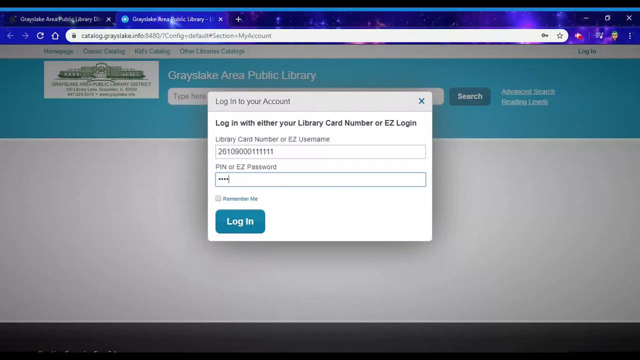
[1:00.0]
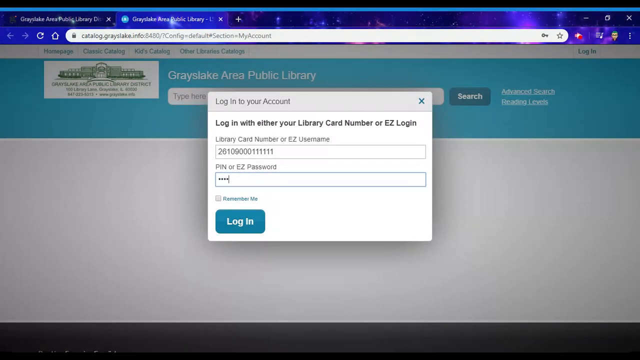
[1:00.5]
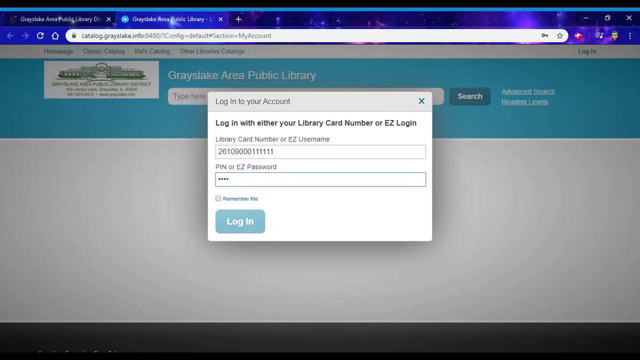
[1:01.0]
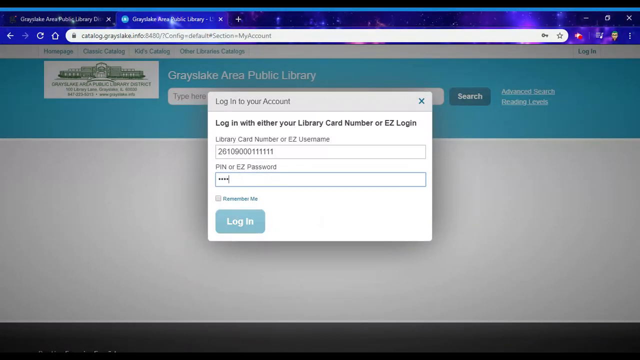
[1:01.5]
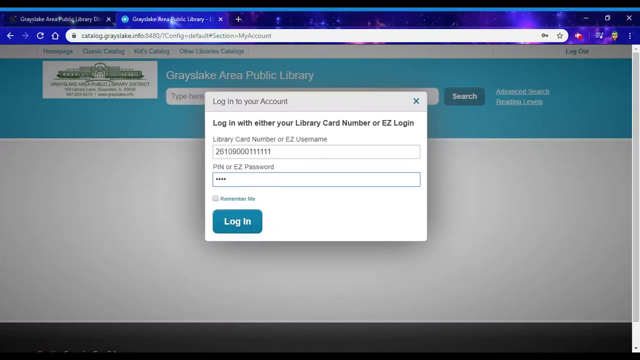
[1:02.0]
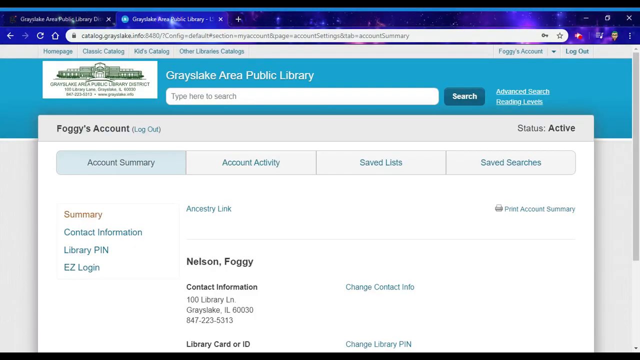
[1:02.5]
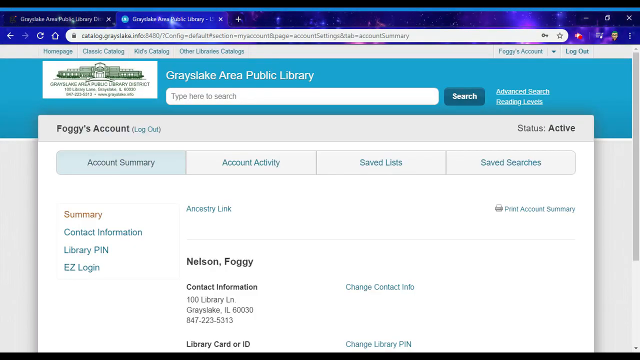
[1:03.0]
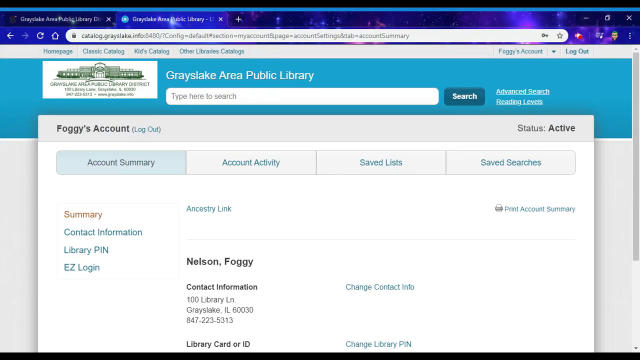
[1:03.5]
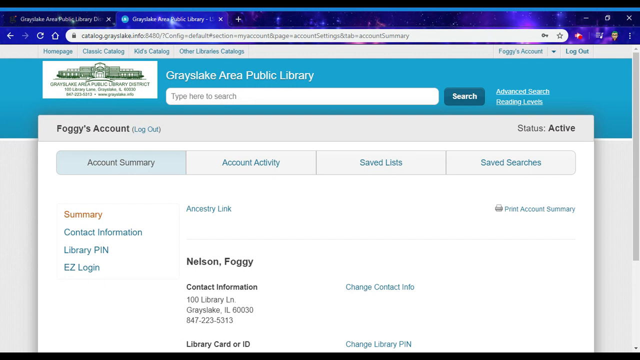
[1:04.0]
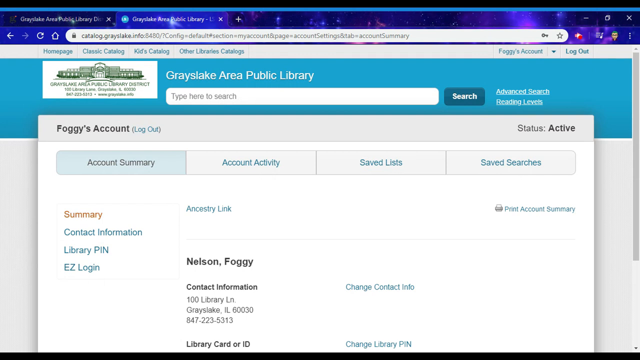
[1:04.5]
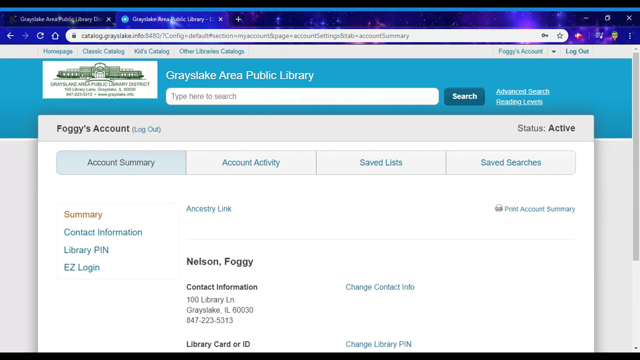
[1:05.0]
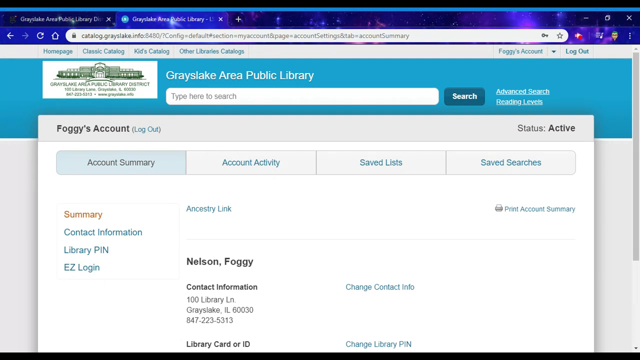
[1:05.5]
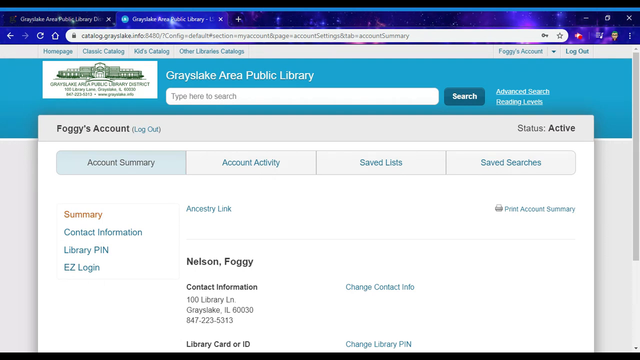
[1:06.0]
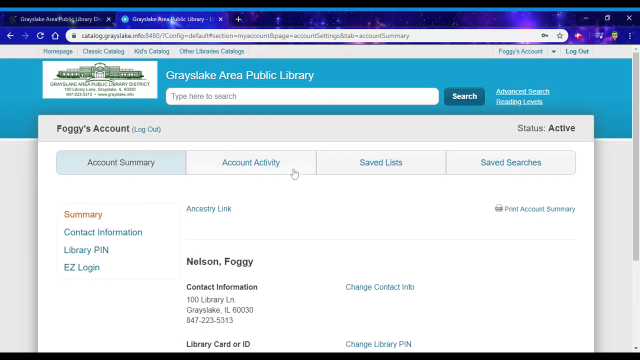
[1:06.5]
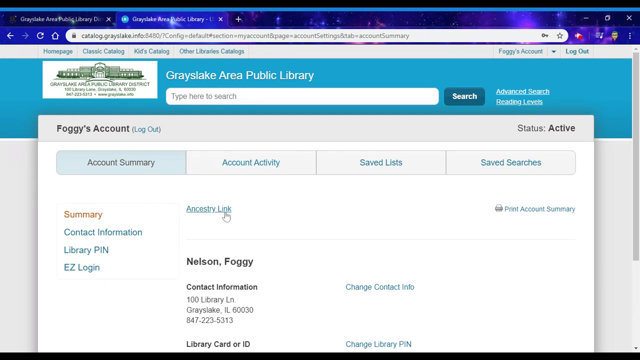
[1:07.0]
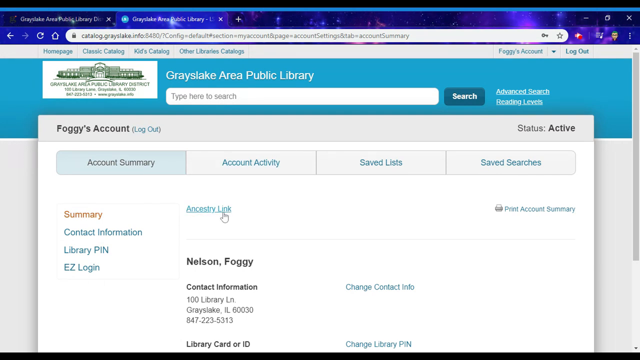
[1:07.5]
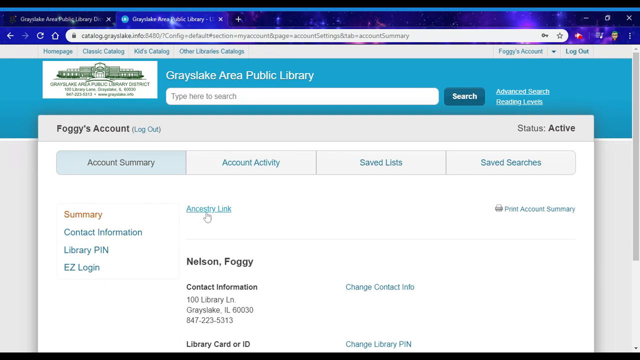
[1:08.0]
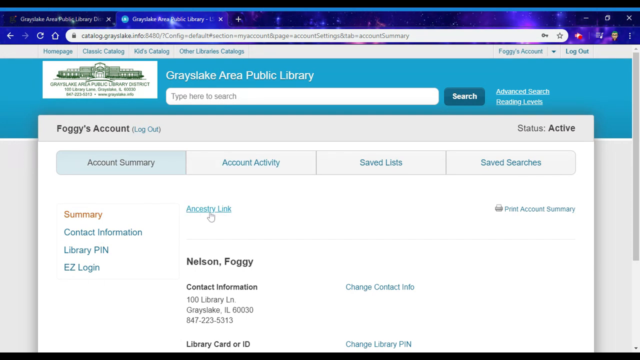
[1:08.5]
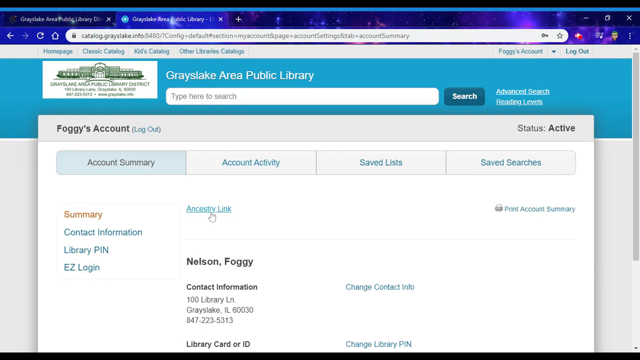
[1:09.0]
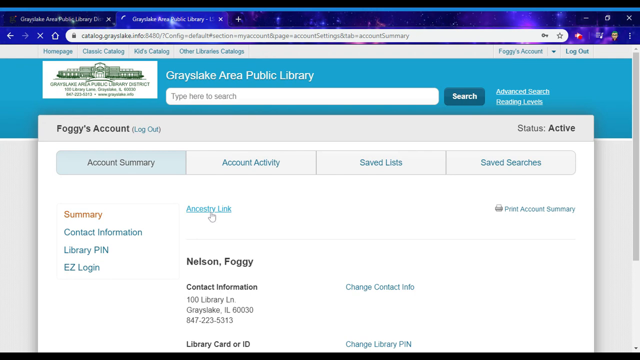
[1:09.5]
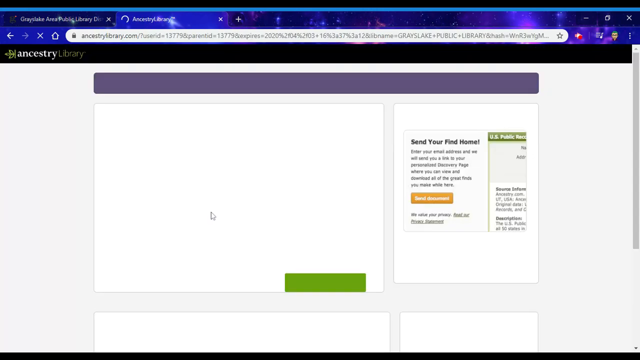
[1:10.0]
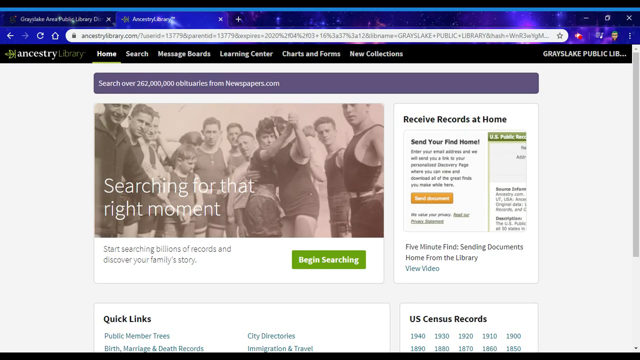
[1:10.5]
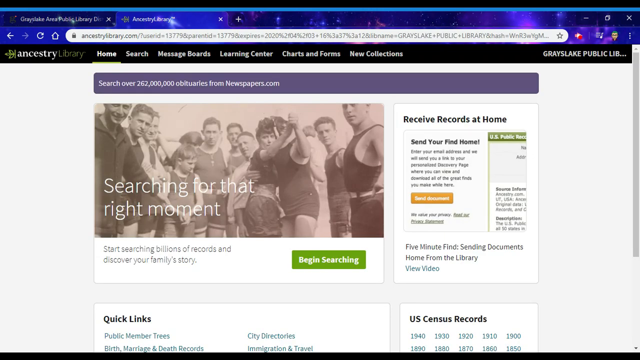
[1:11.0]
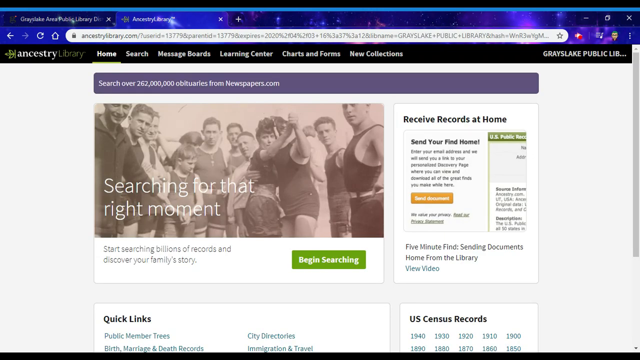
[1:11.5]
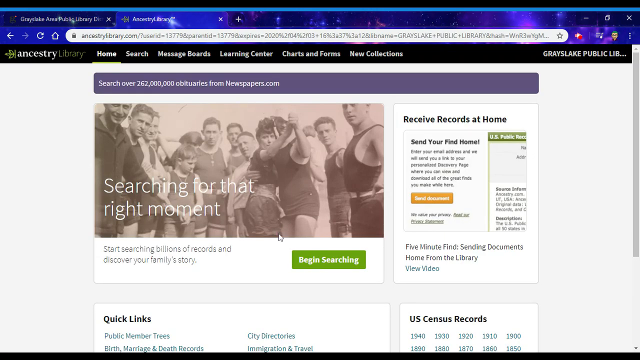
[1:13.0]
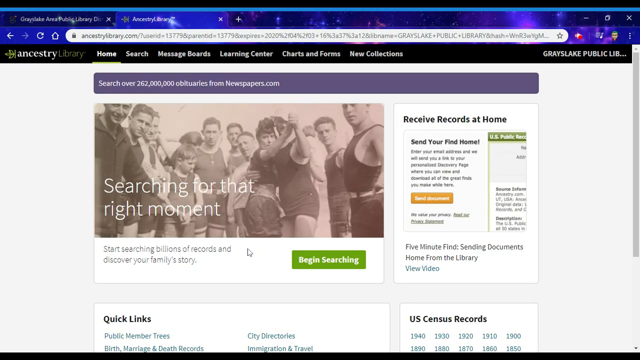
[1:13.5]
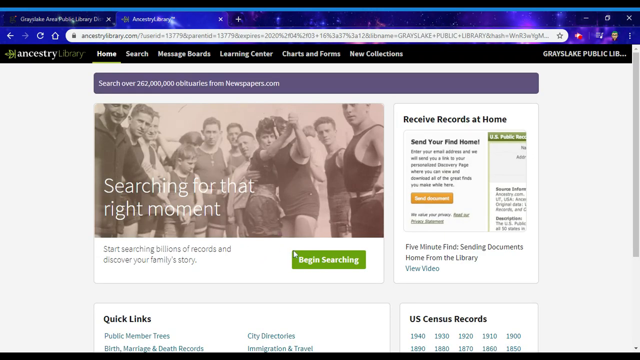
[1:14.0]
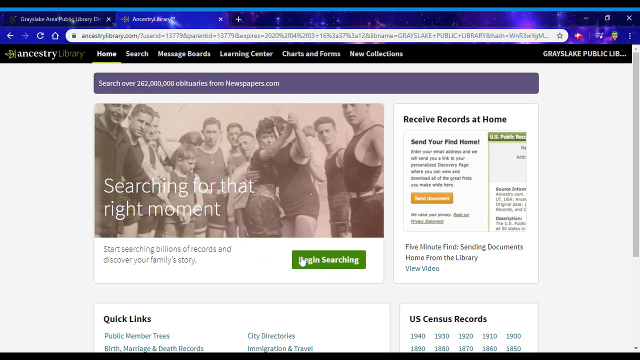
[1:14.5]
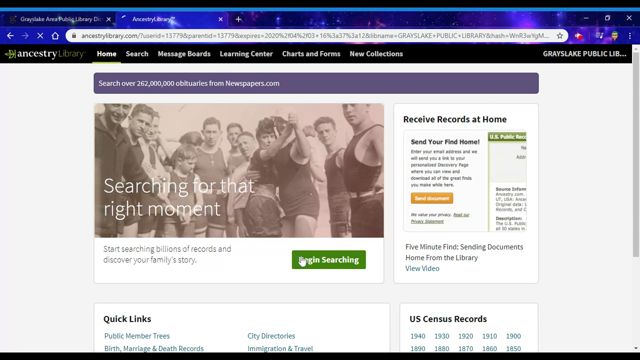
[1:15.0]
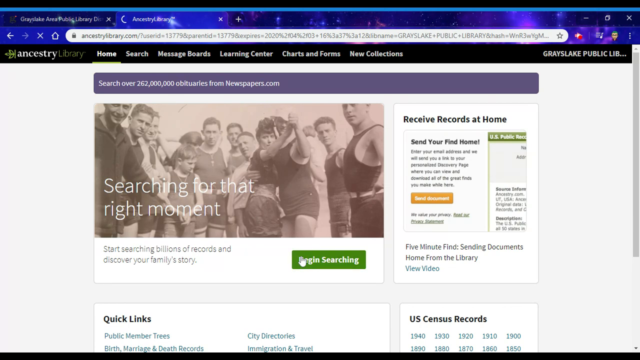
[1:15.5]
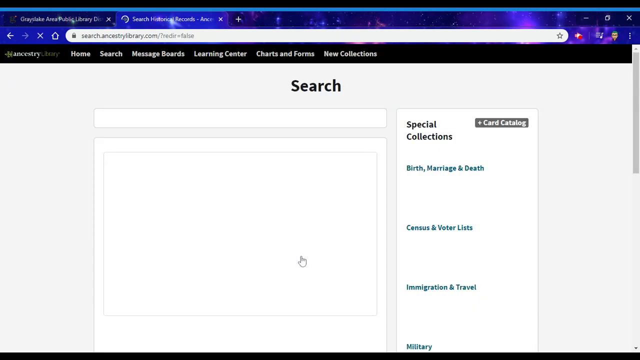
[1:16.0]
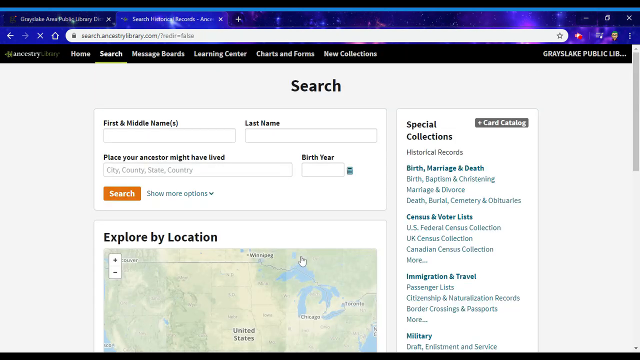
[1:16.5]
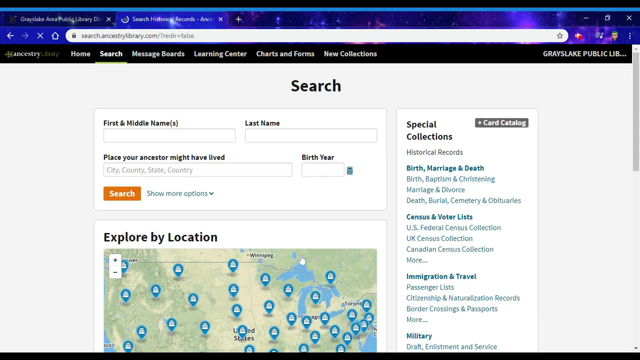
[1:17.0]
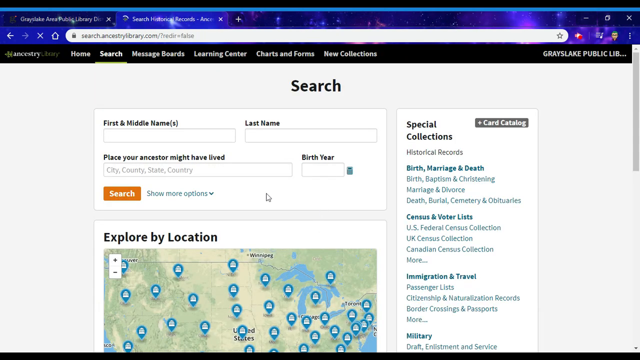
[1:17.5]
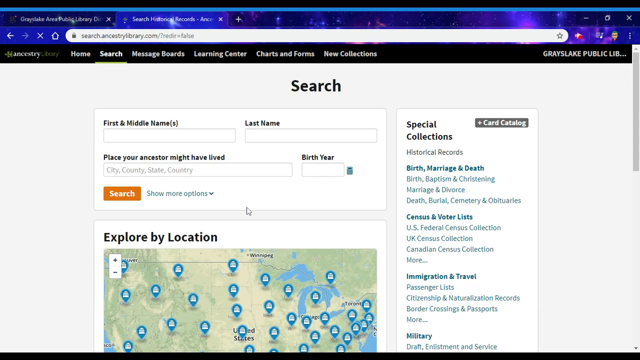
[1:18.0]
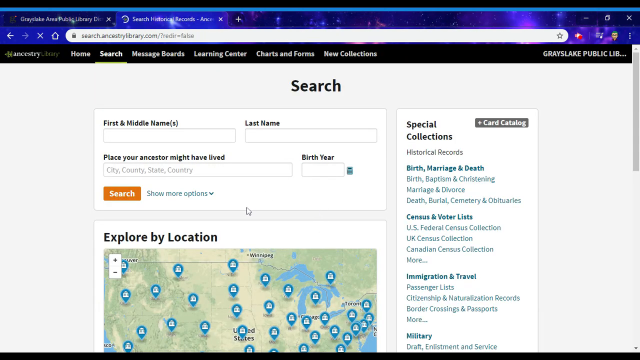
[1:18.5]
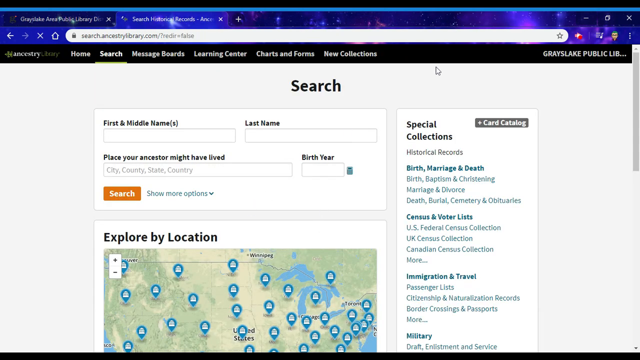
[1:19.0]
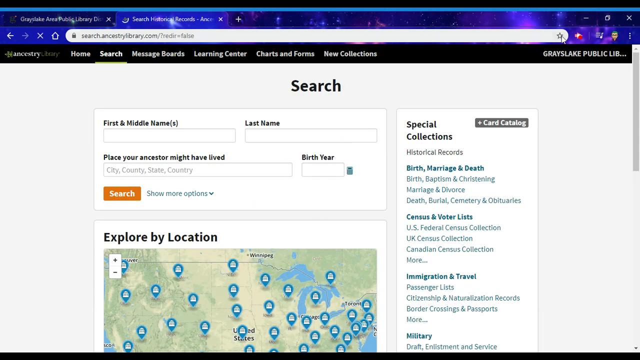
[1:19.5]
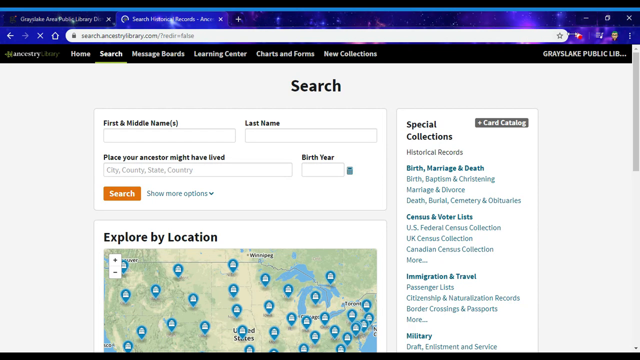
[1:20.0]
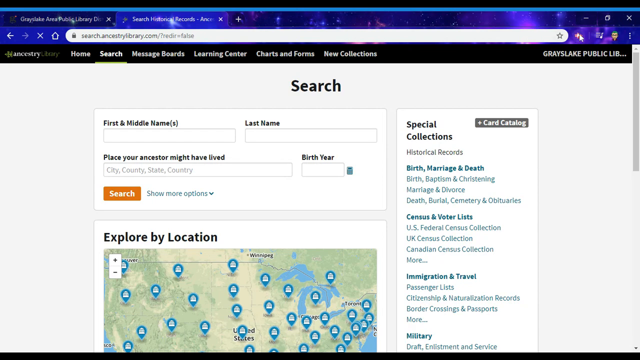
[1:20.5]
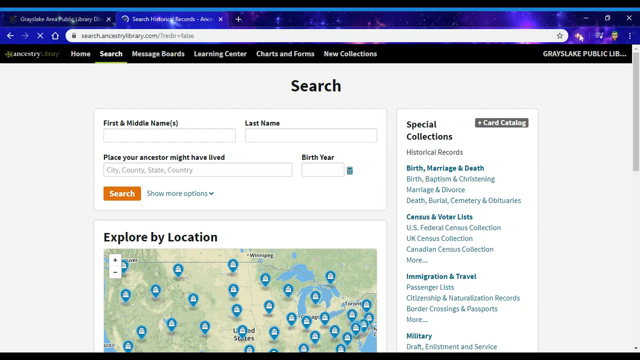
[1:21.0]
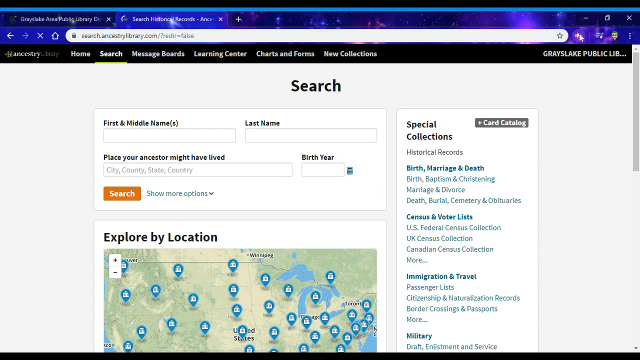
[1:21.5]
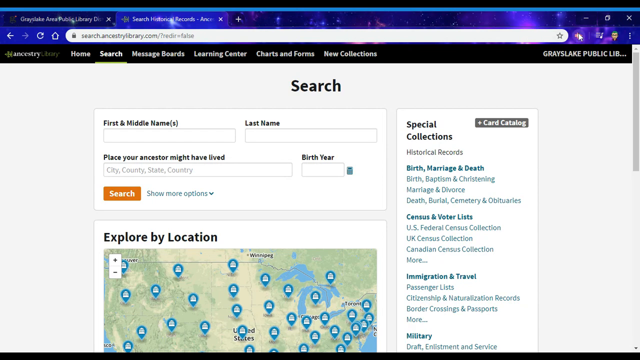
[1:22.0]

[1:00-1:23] The maximized browser window, either Mozilla Firefox or Google Chrome, seems to have a galaxy-style theme. Two tabs are open: the library tab and the public library my account page, where the PIN has been entered in the login dialog box. OK is clicked, and the account opens, showing "Foggy's account" in the middle of the page under a teal banner header reading "Gray's Area Public Library" with a search bar; there appears to be a logo in the upper left. The account section is in a box in the middle, with what look like tab buttons at the top labeled "Account Summary," "Account Activity," "Save Lists," and "Saved Searches." On the left side under Account Summary are four links: "Summary," "Contact Information," "Library PIN," and "Easy Login." At the top is "Ancestry Link." The cursor hovers over it and clicks, opening Ancestry.com. In the middle of Ancestry.com is a button area reading "Searching for the Right Moment. Start searching billions of records to discover your family's history" with a "Begin Searching" button. Clicking it brings up a search page, and it looks like the page is then favorited.